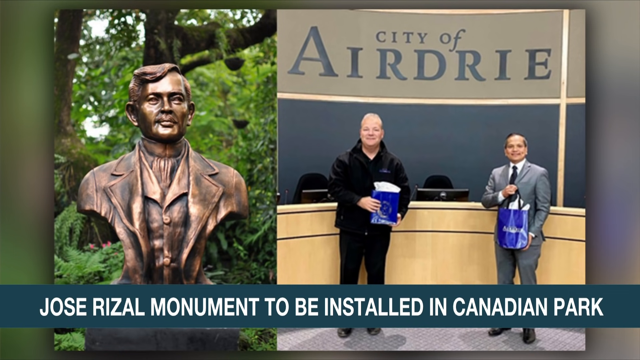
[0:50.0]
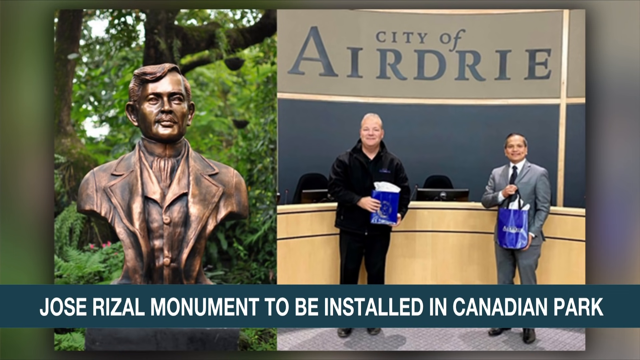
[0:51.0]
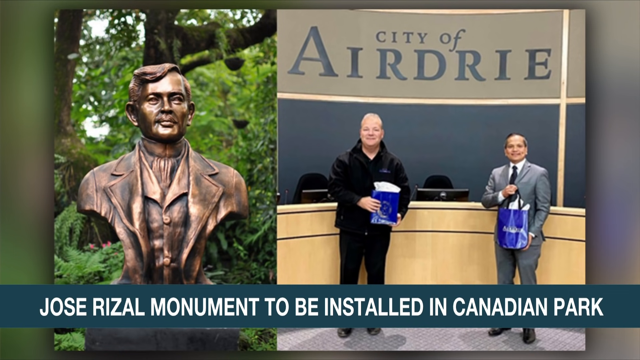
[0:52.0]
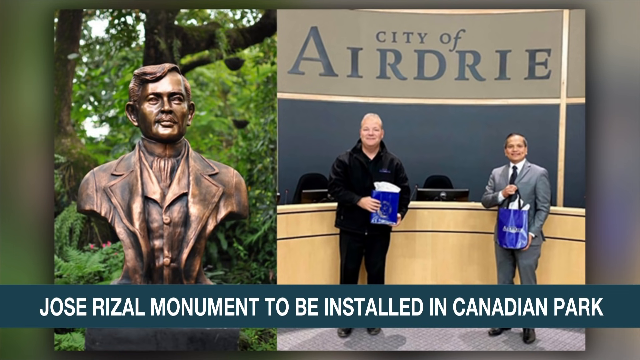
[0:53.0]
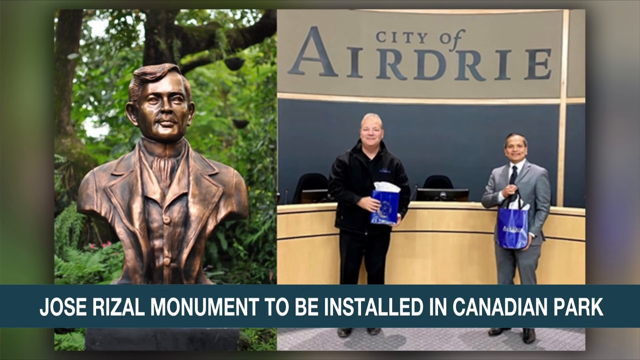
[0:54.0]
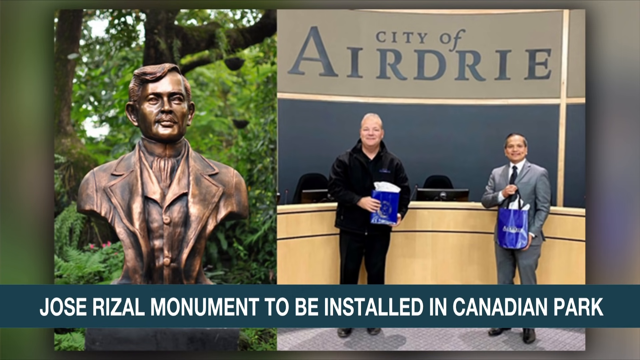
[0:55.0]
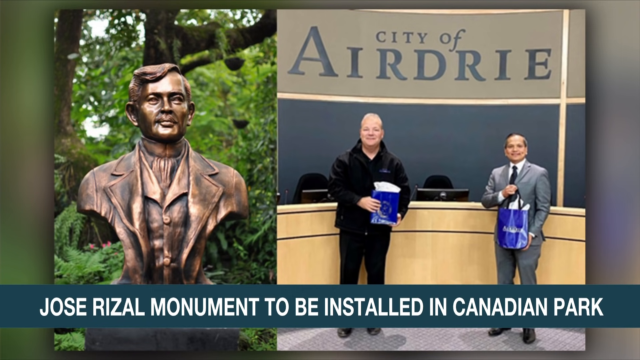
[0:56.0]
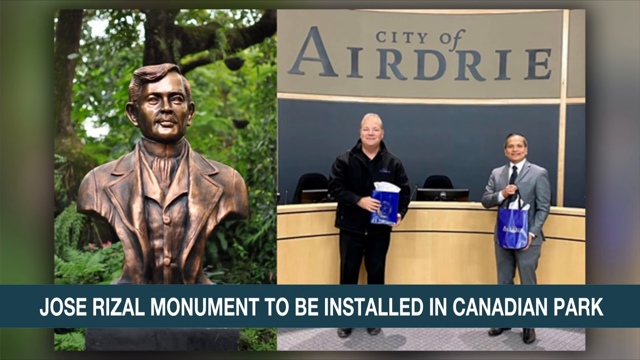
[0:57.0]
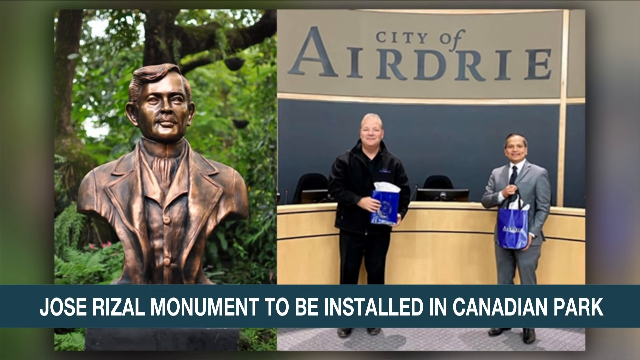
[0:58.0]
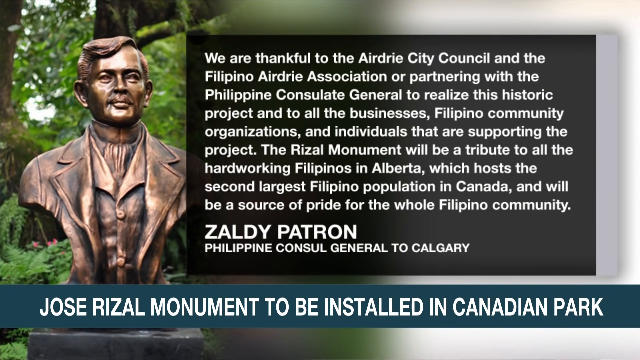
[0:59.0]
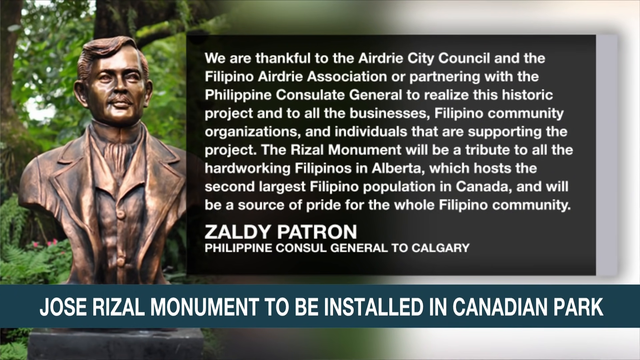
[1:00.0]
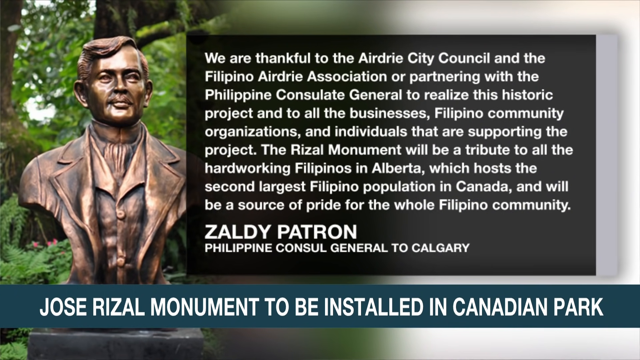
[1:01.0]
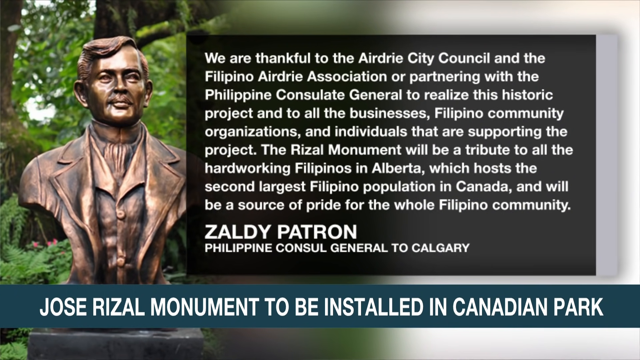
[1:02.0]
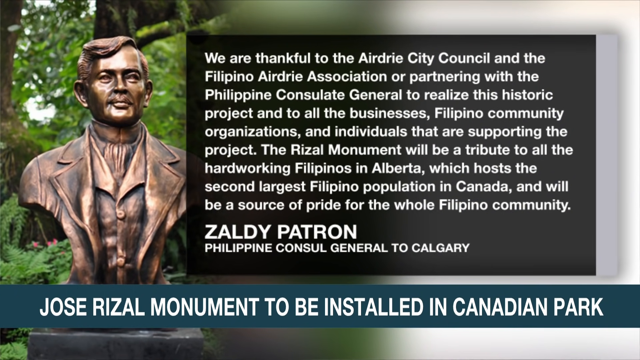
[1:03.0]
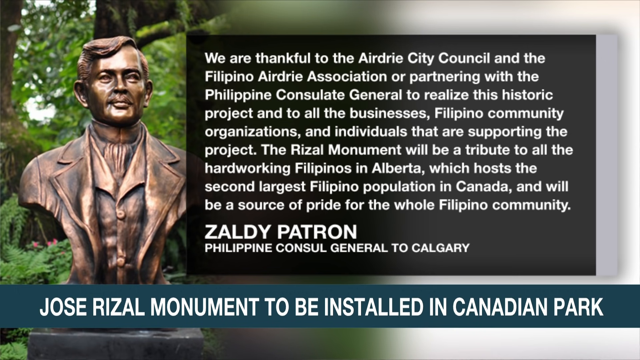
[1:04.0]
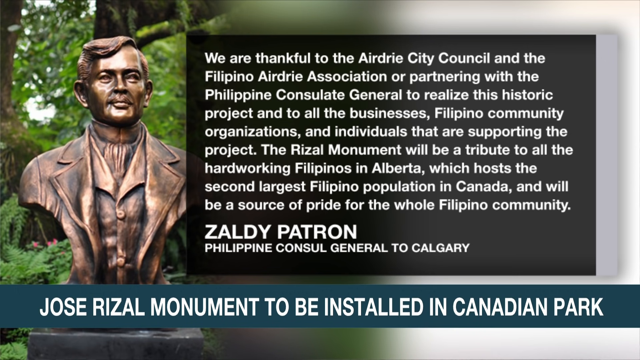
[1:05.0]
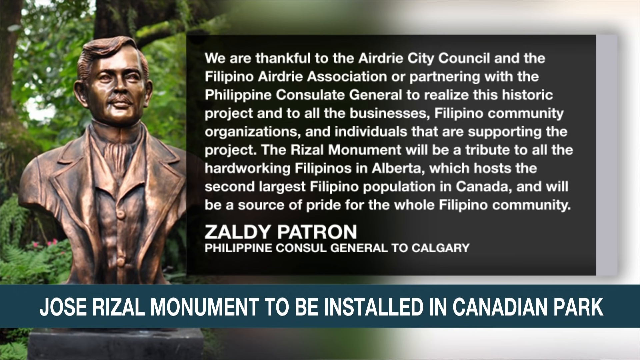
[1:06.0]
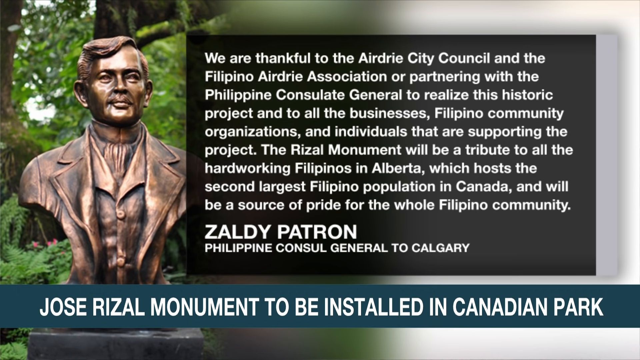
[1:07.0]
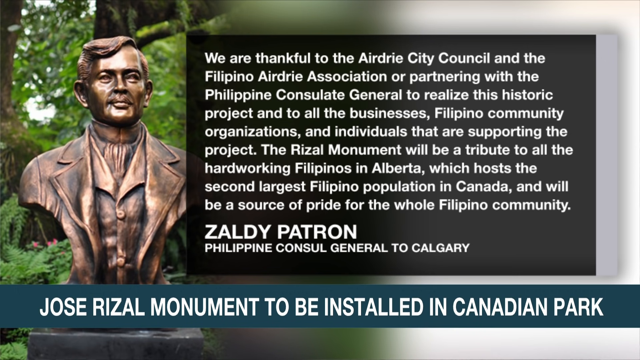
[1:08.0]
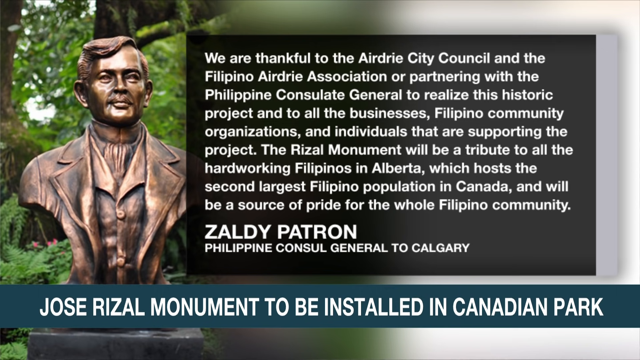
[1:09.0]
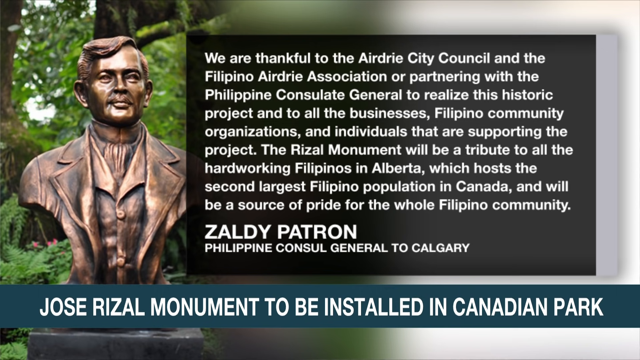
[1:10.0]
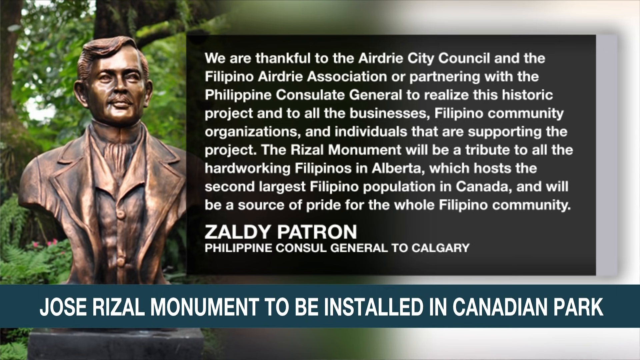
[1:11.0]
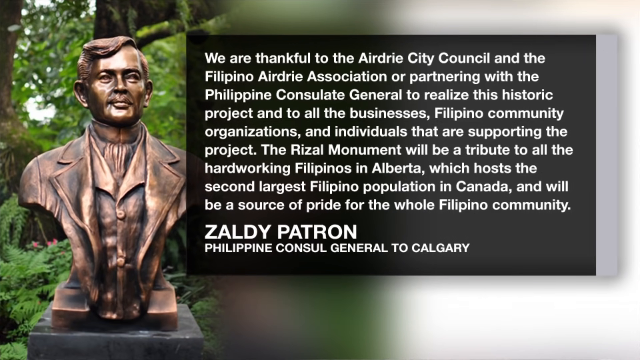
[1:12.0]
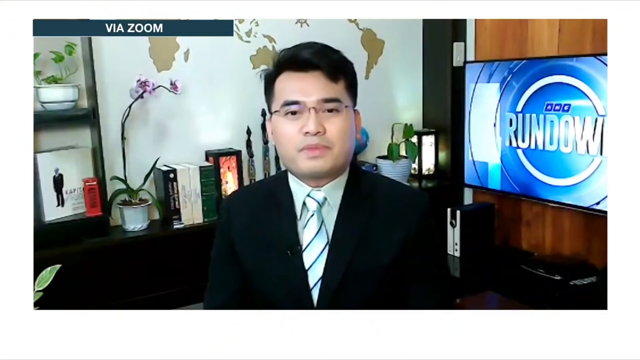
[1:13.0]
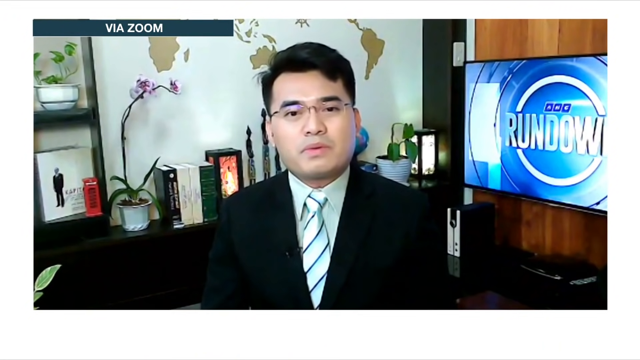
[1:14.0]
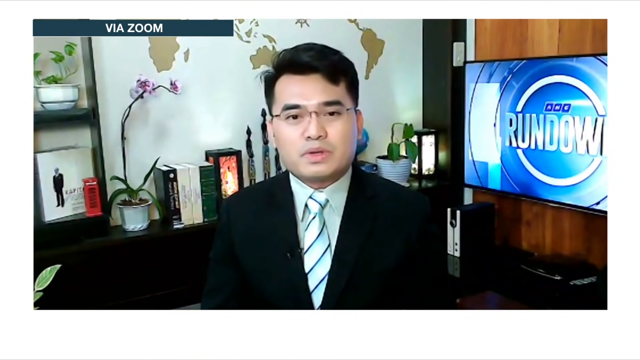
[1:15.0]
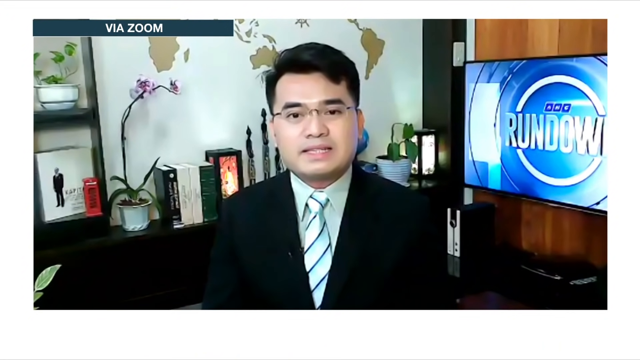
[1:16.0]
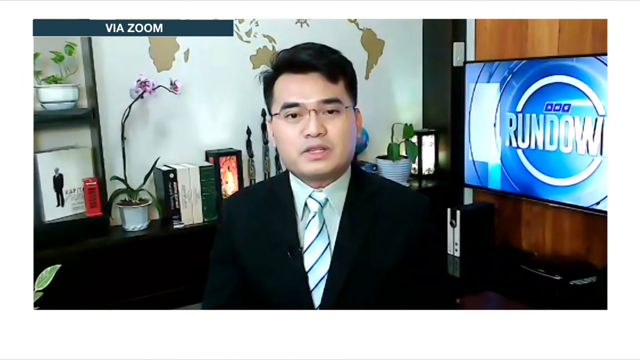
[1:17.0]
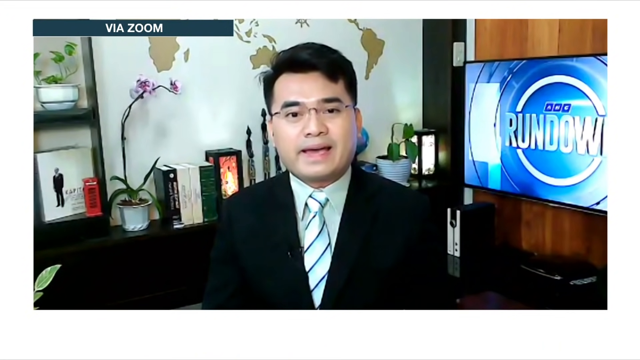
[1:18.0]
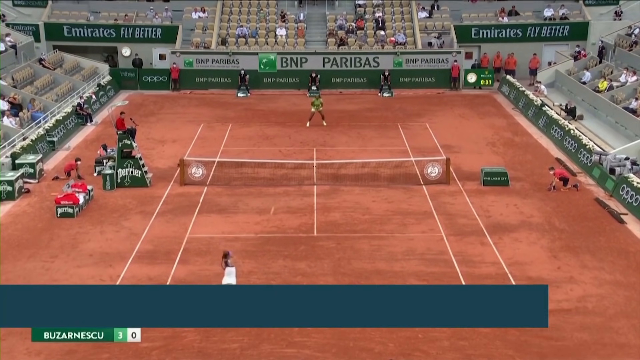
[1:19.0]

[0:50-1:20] The split screen continues. On the left-hand side is a shiny bronze statue of a man, with trees and foliage in the background. On the right side, text reads "City of Air Dry," and just below this banner two men stand holding blue objects in their hands, both smiling and looking into the camera. The man on the right wears a gray suit, and the man on the left wears black clothing. A banner at the bottom of the screen reads "Jose Rizal Monument to be installed in Canadian Park." After several seconds, the video switches to an image of the bronze statue along with a quote from Zaldi Patron, the Philippine consul general to Calgary. Finally, the video switches to a suited man sitting at a desk, speaking directly into the camera. He wears glasses, a black suit, a white undershirt and a blue striped tie. Just over his shoulder are books, a purple orchid and a blue TV monitor.